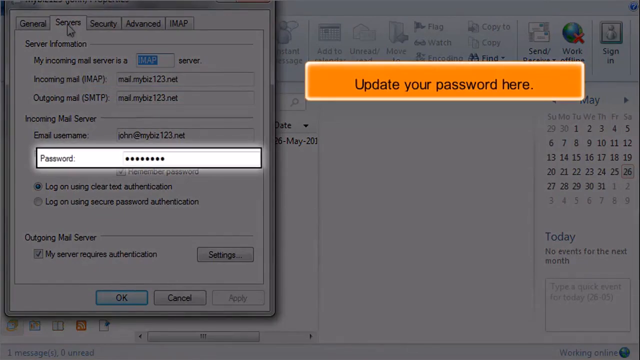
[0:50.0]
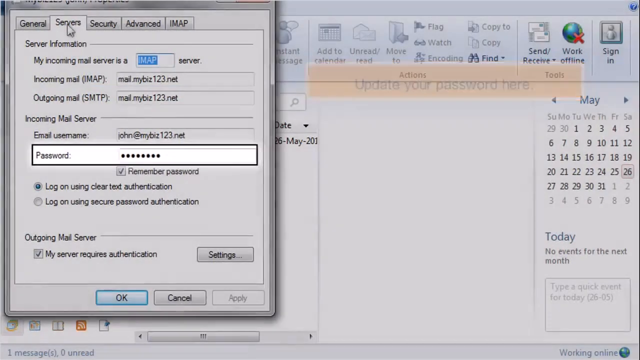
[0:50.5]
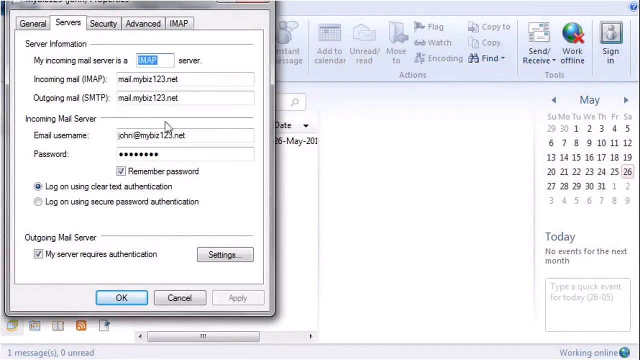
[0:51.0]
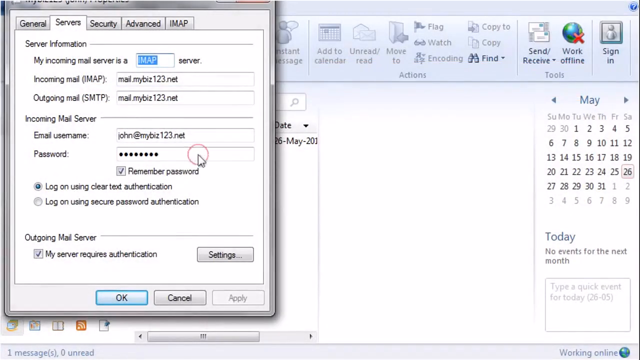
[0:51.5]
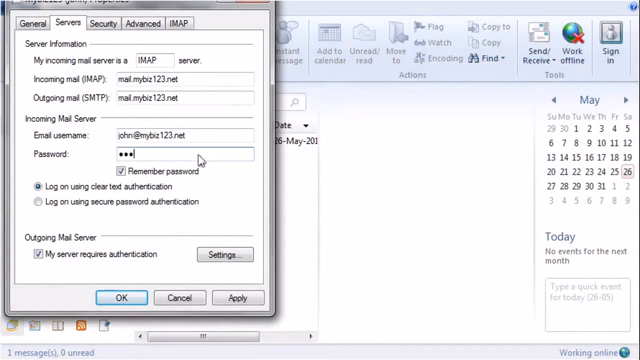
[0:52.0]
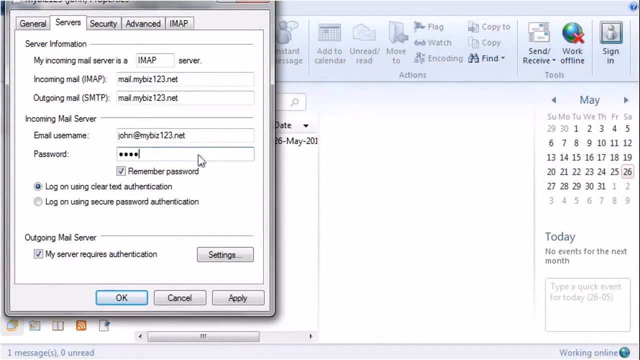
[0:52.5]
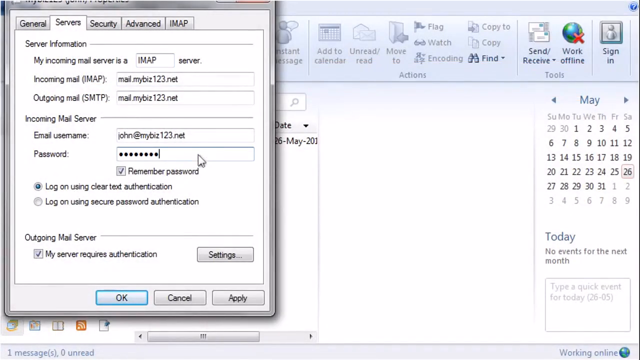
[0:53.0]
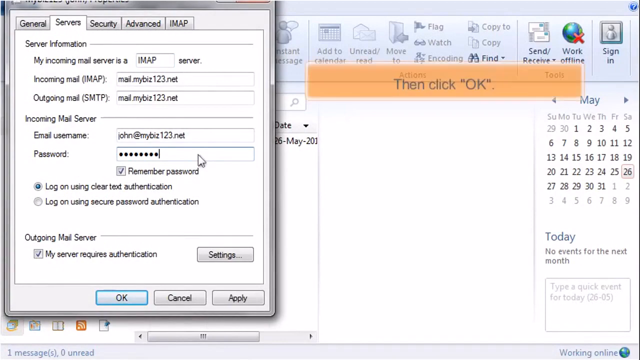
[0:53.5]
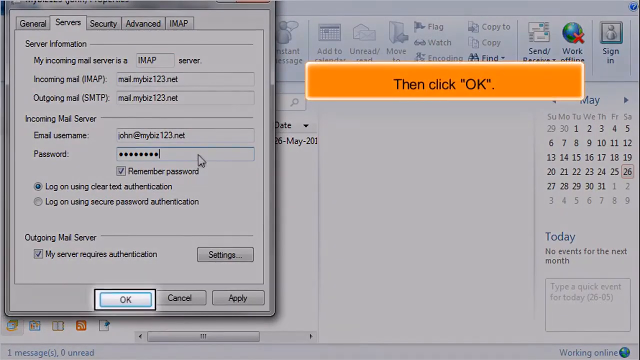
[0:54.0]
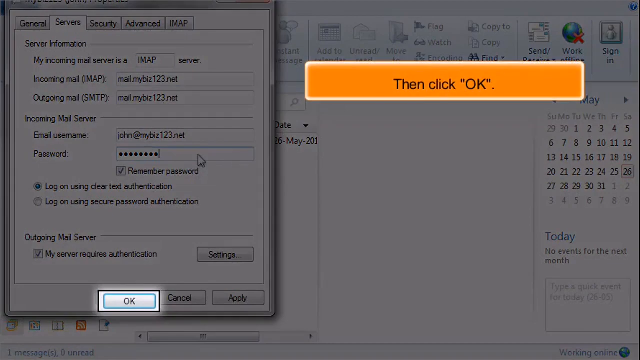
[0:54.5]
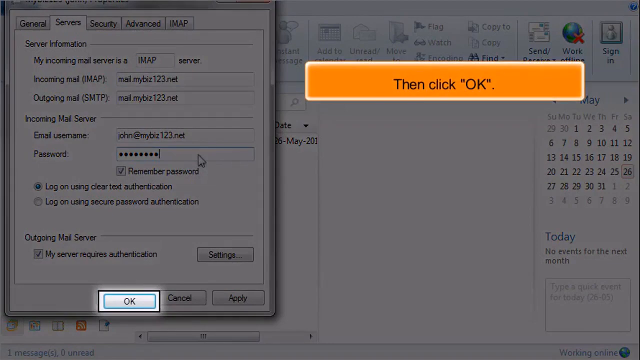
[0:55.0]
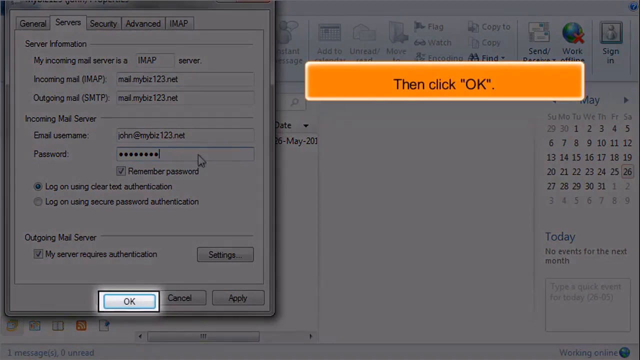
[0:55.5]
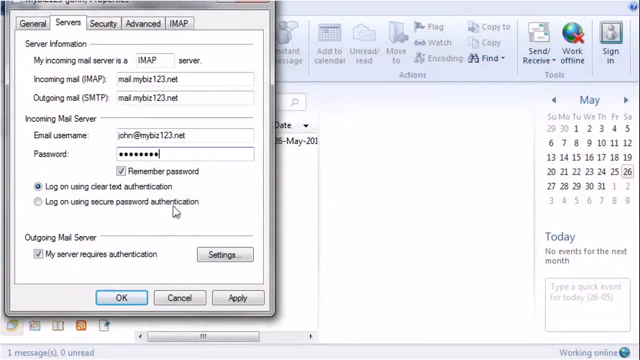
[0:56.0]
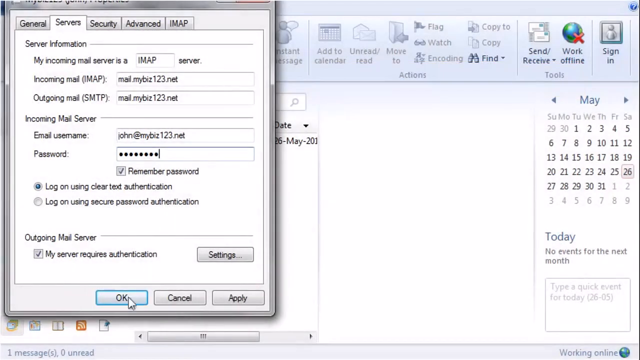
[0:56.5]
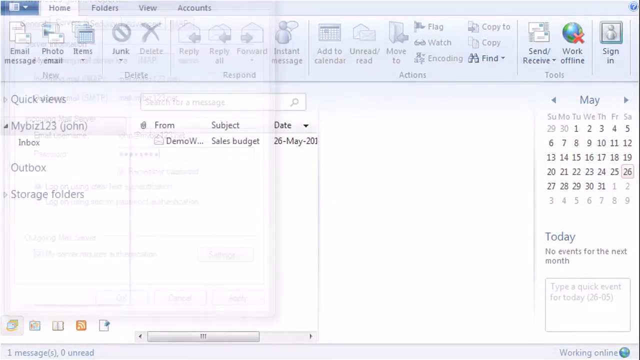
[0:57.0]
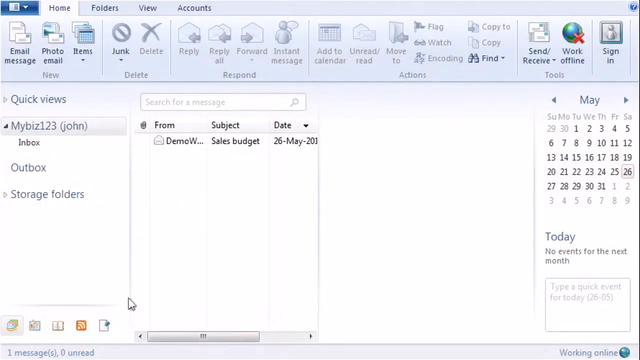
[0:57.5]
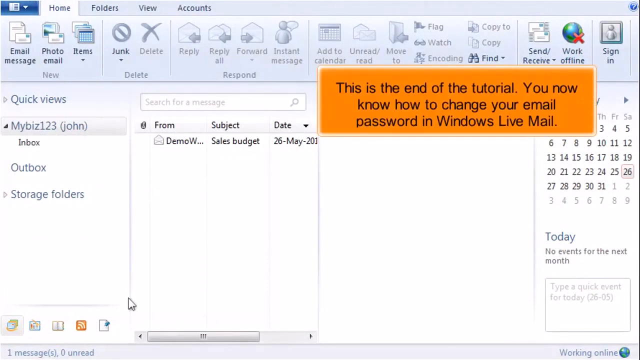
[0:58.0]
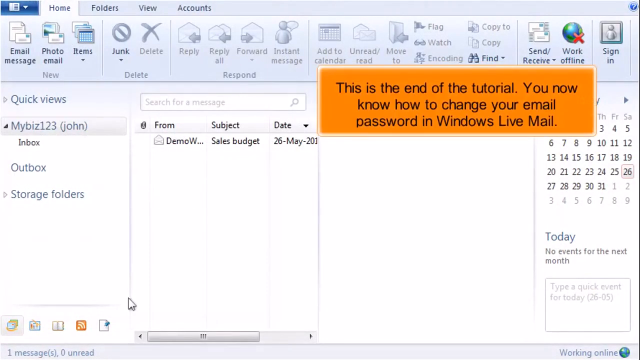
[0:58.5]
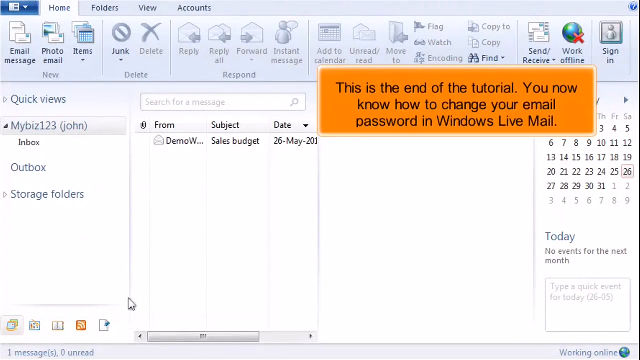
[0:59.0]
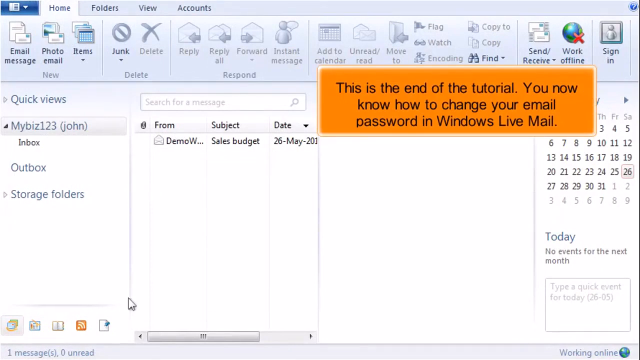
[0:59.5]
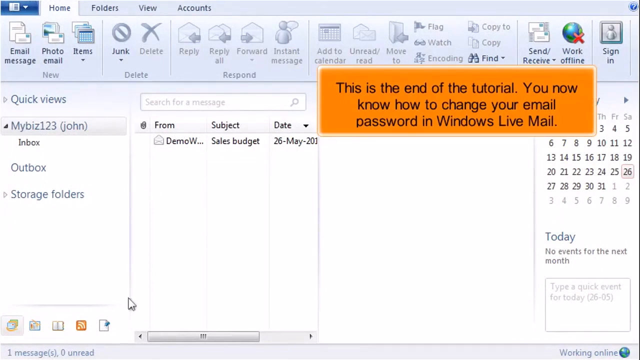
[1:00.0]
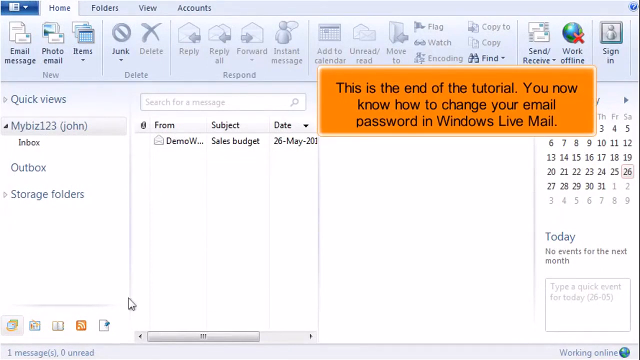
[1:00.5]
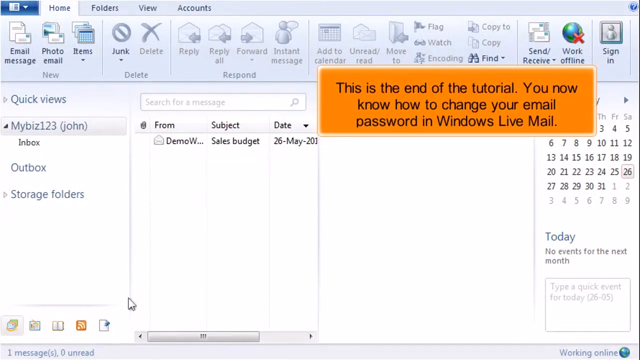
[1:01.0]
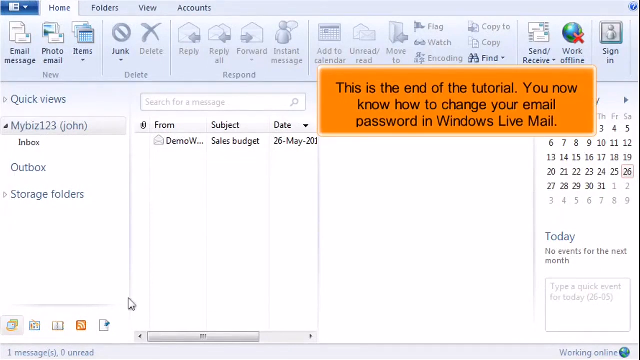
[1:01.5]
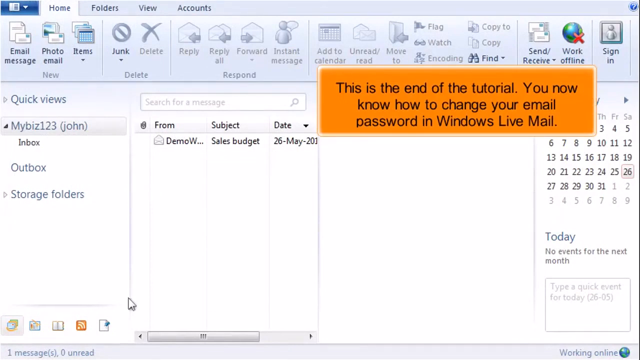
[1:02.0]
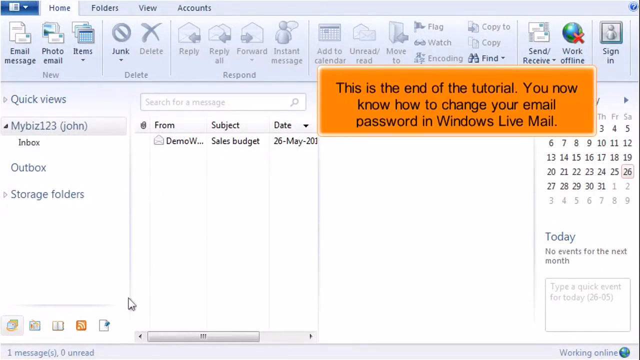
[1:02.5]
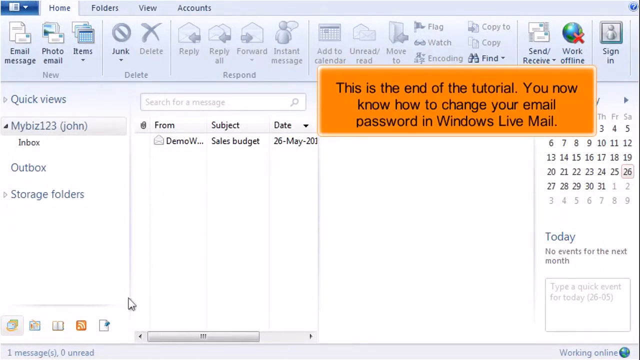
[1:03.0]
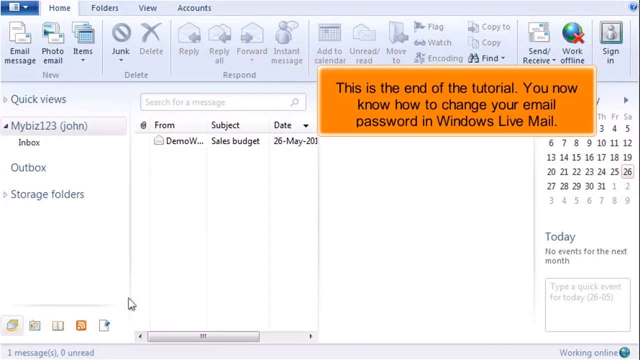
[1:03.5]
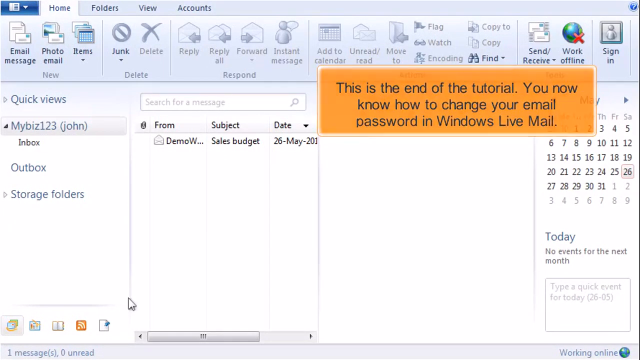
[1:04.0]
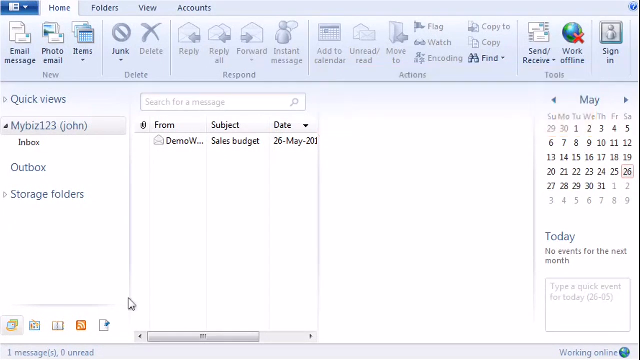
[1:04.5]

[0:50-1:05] This tutorial from Host Papa shows how to change an email password in Windows Live Mail, showing where to click.